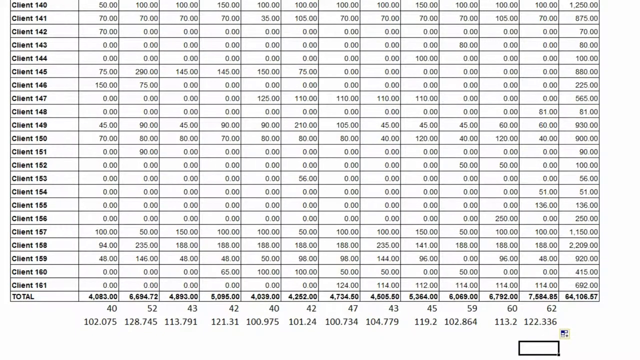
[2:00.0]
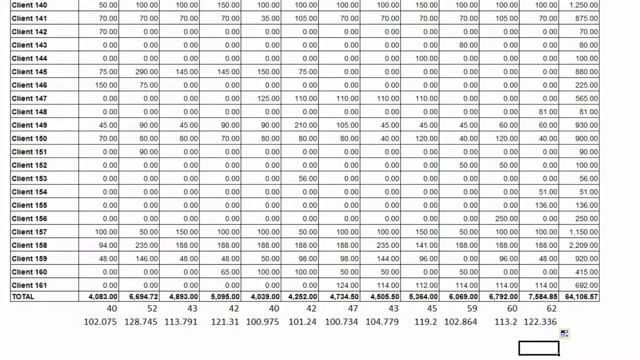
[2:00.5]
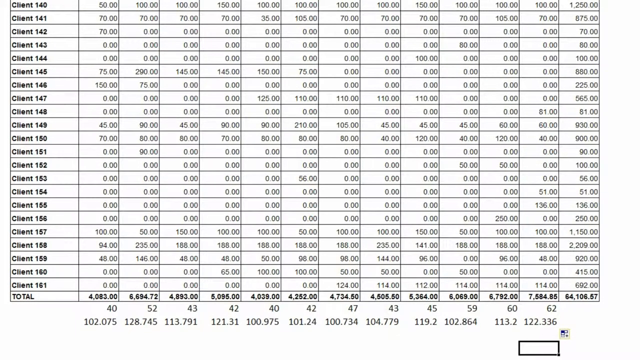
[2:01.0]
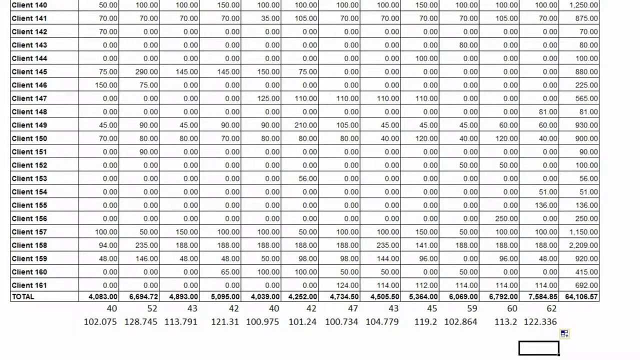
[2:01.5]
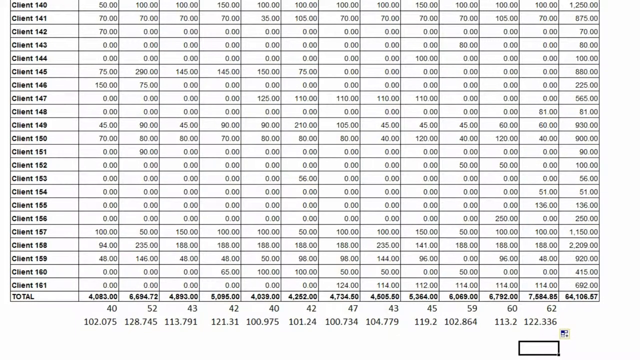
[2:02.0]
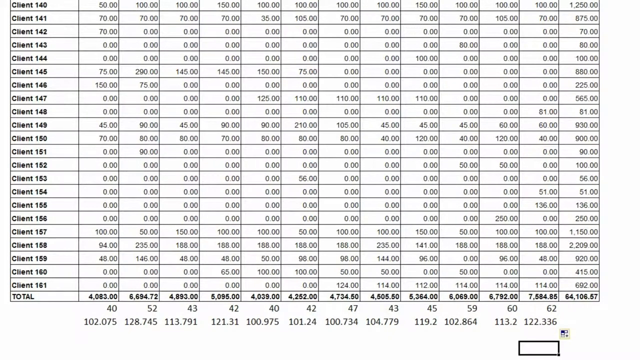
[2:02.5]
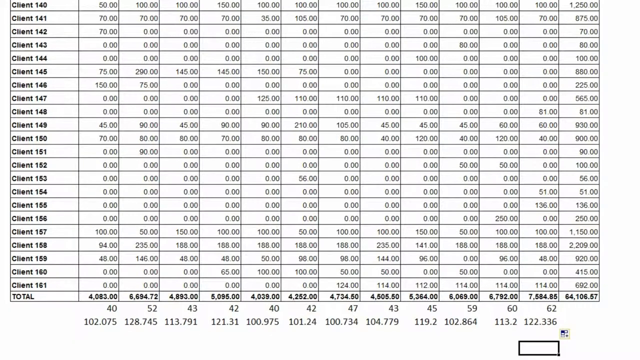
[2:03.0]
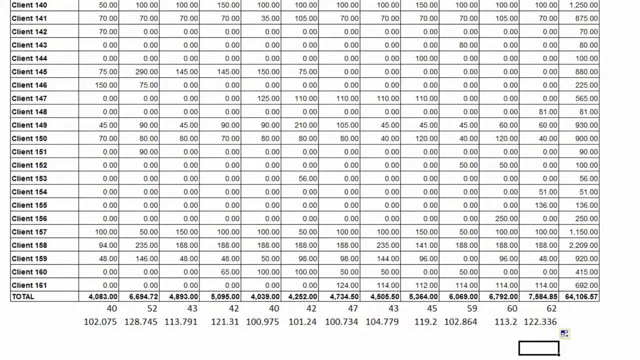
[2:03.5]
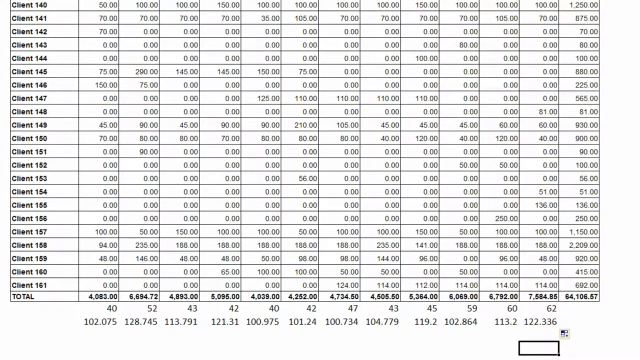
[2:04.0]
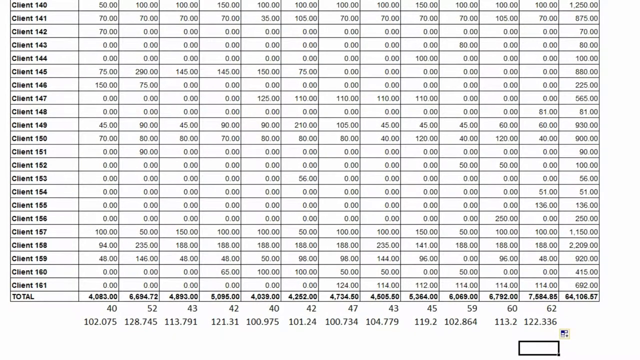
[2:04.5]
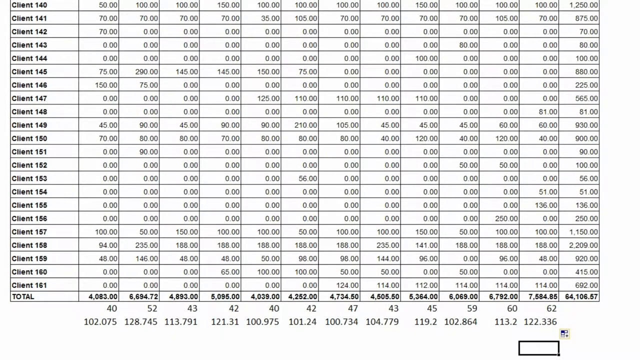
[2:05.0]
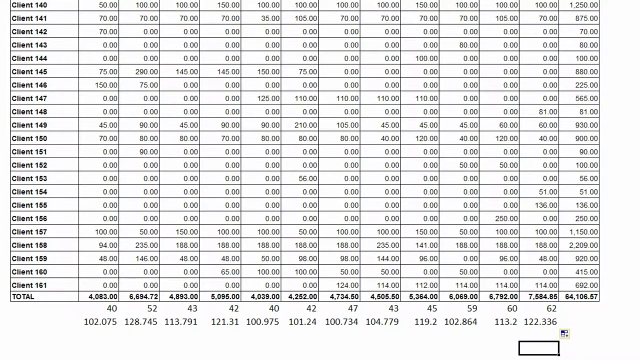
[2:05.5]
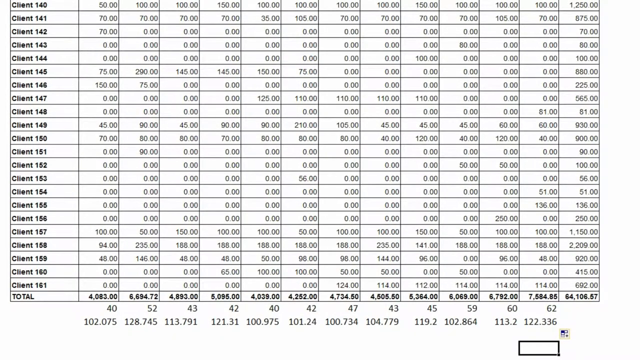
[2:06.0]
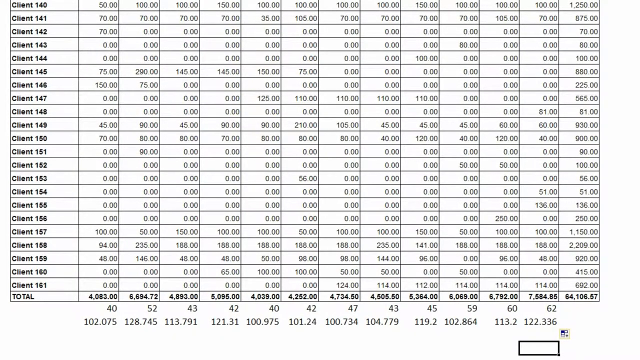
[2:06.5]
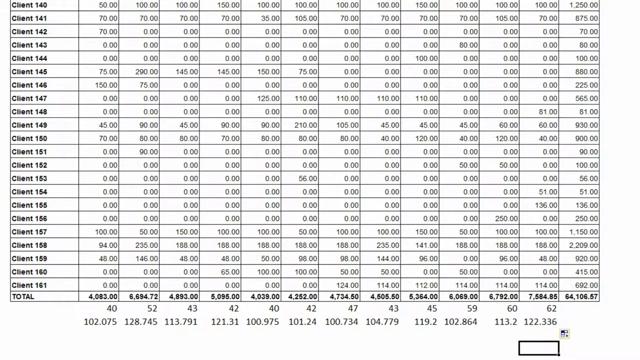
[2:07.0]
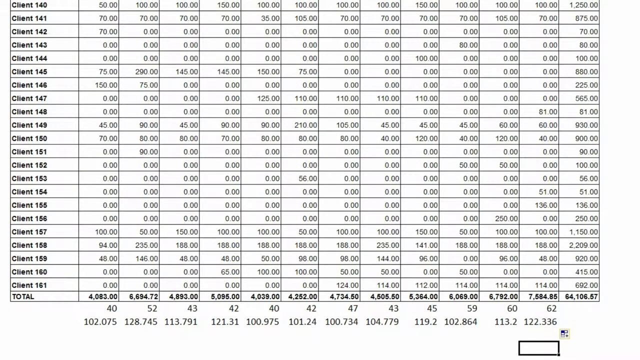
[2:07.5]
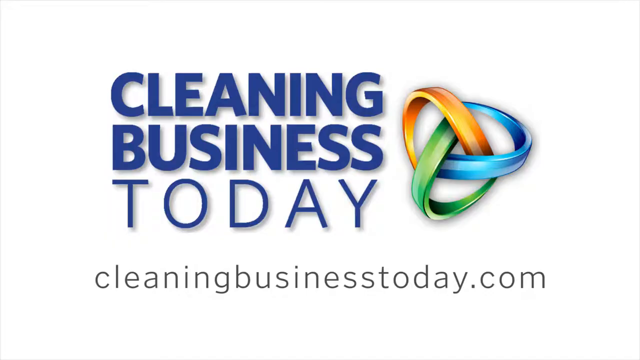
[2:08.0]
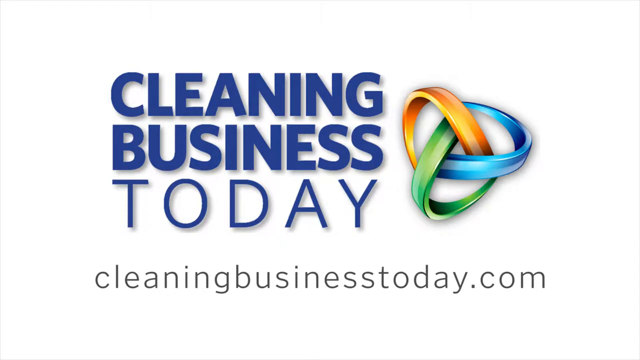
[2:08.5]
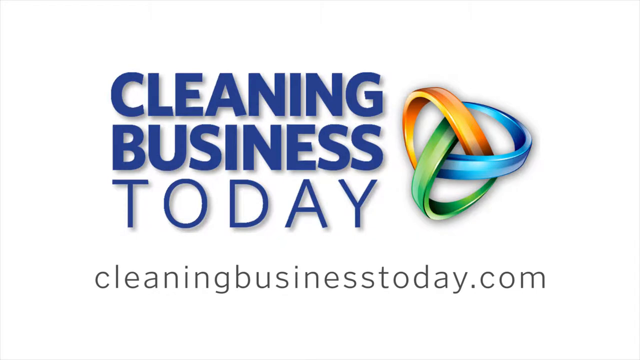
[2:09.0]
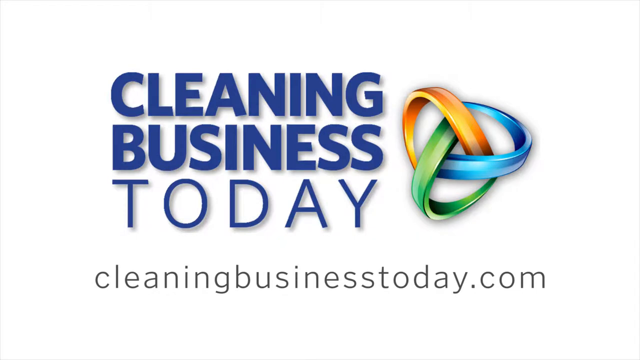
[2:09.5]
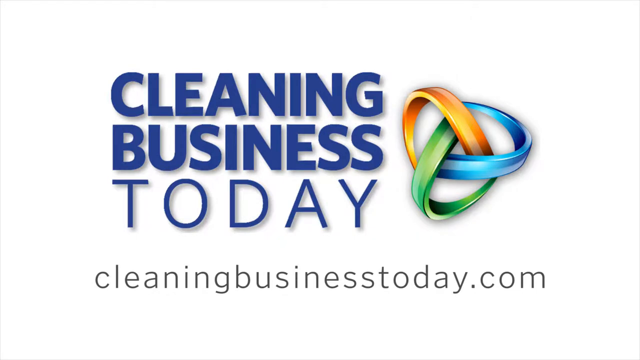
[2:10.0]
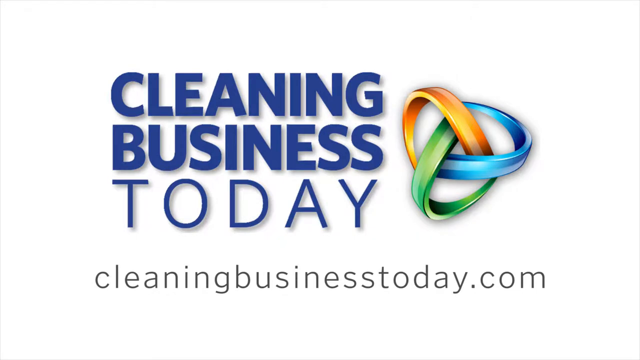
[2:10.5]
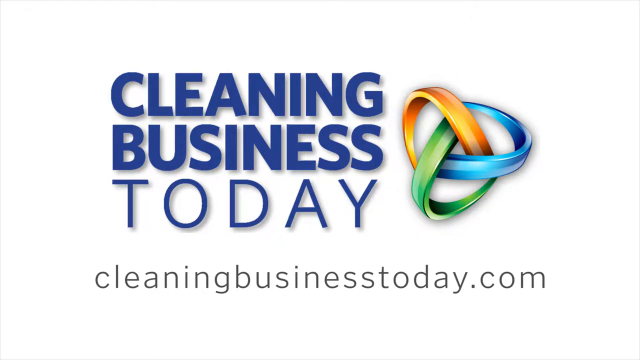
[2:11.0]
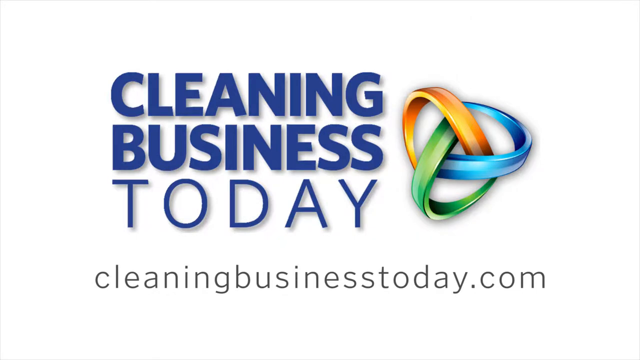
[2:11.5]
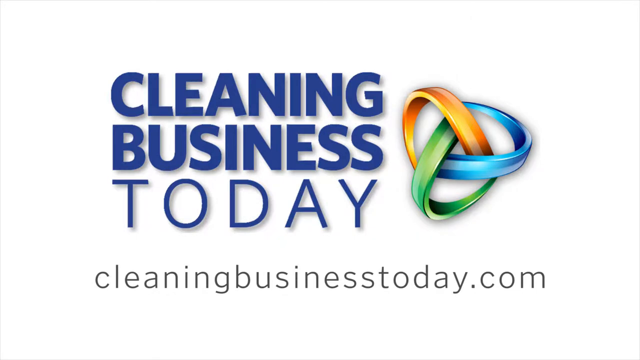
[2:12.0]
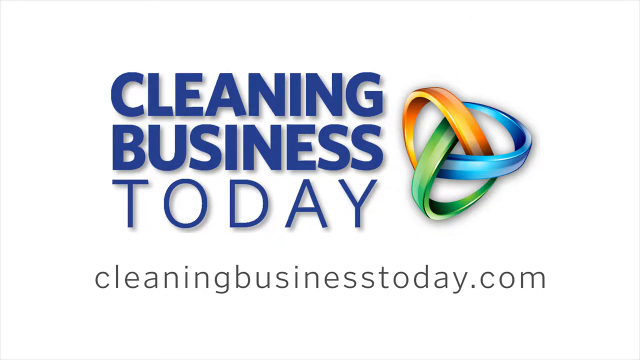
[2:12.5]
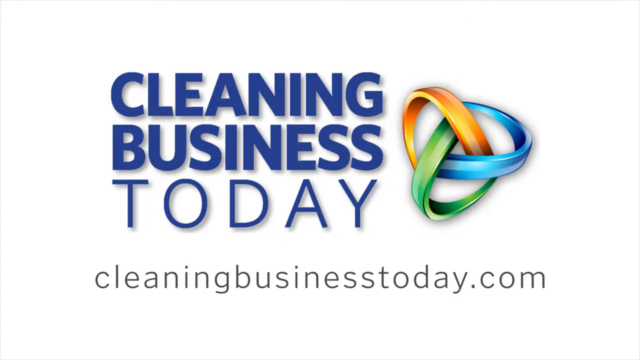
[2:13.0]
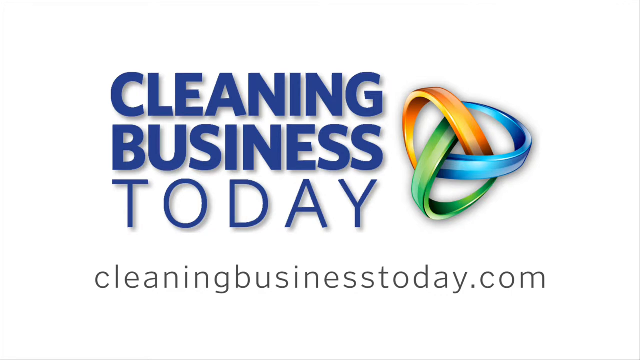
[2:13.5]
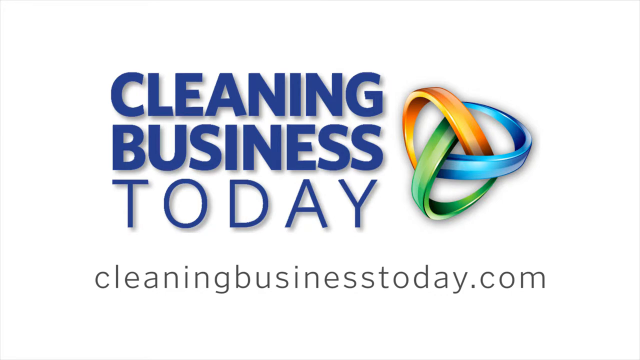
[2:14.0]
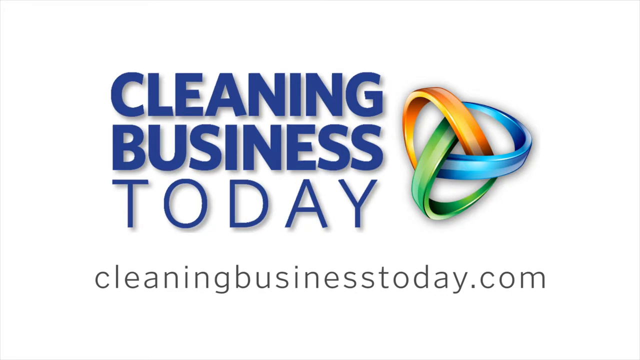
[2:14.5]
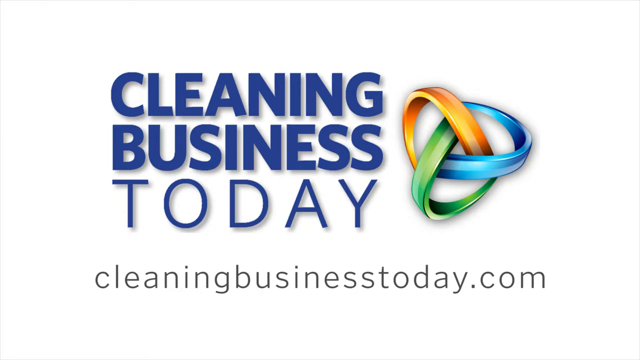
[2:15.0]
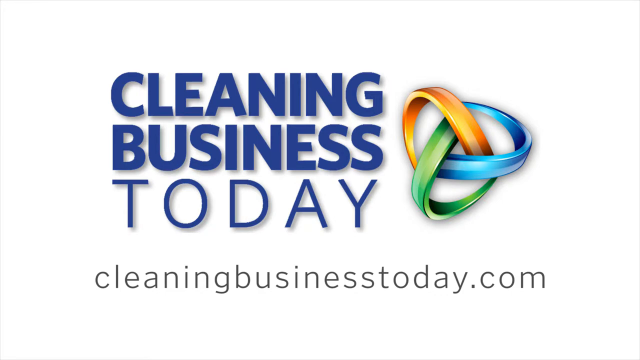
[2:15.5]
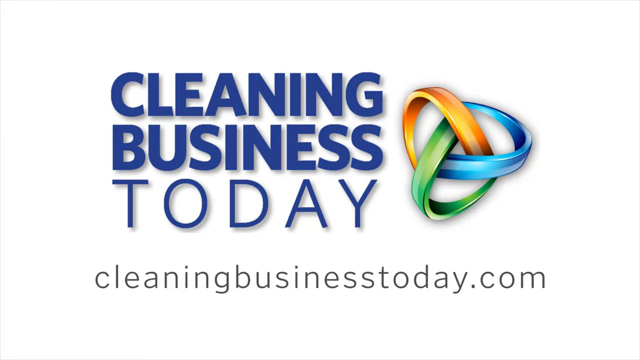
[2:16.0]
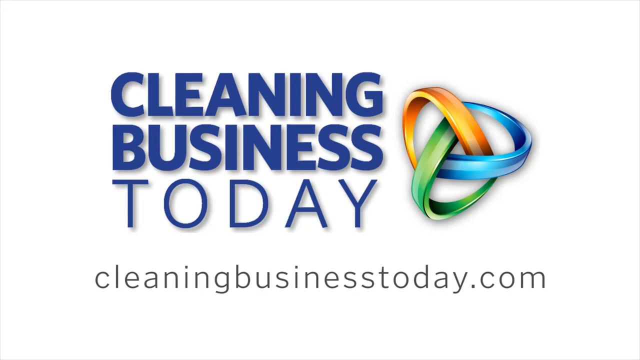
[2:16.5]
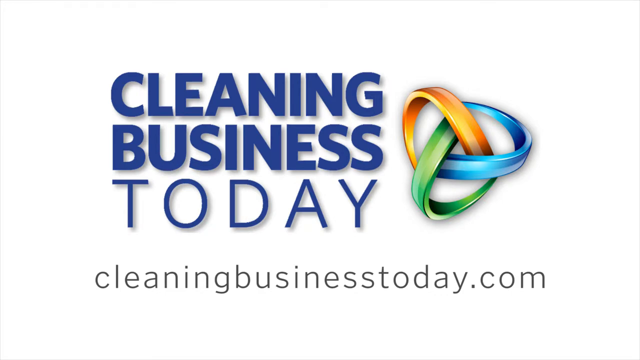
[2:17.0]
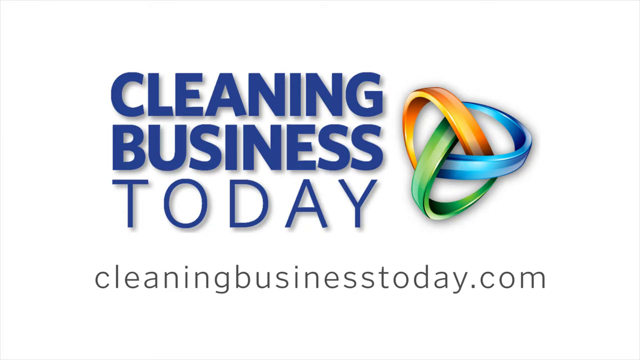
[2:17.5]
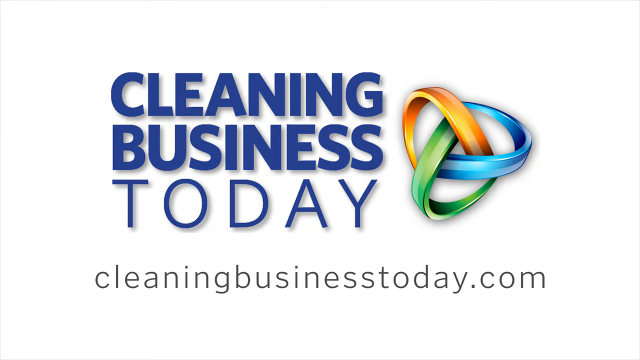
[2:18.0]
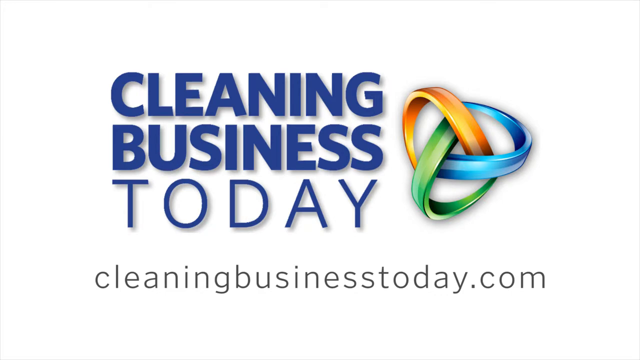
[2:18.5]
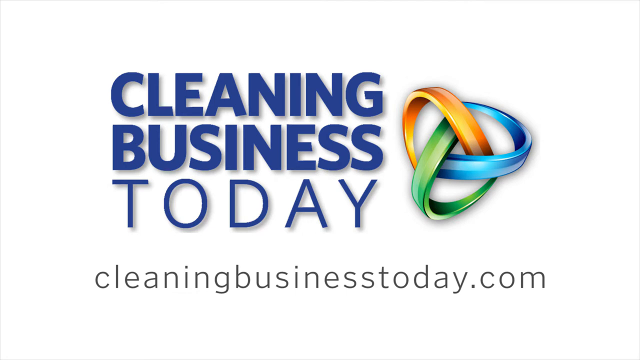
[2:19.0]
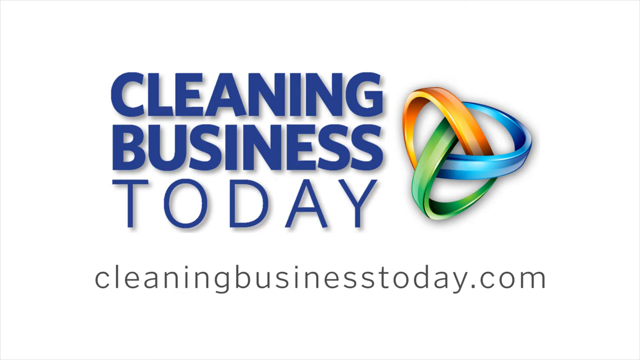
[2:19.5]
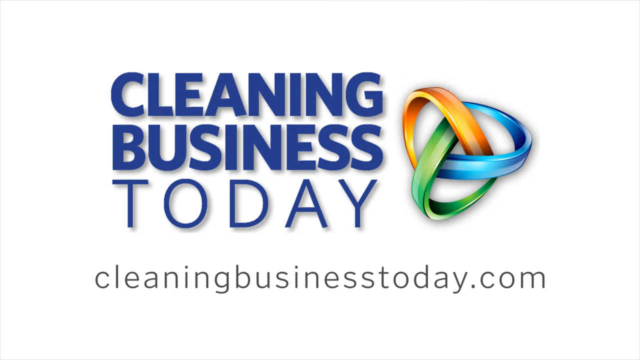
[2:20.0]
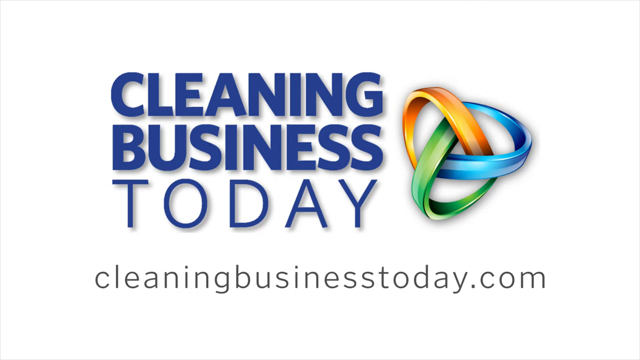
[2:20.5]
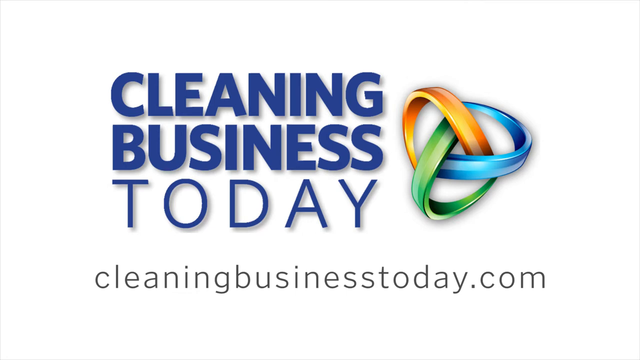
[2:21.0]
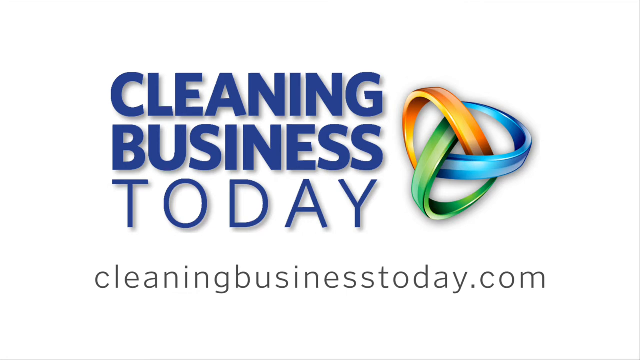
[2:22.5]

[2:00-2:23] Somebody is teaching with, or filming themself using, the spreadsheet titled "Active Clients by Month" for a cleaning business. It is a Microsoft Word-style spreadsheet starting at Client 1 and going to Client 161, with no last names, and the 12 months of the year in columns. At the end of each row is the total the client was billed for the year, and down the columns is what seems to be a running total of the money earned that month, though it does not seem to add up to the values in the columns. A box is open at the bottom near November. The video then cuts to "Cleaning Business Today" in all-caps teal lettering on white, with a logo that is sort of like an infinity loop shaped like a triangle, changing through three colors: green, blue and yellow. "cleaningbusinesstoday.com" appears at the bottom.